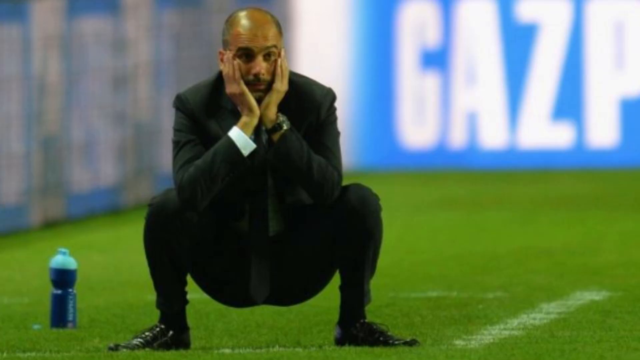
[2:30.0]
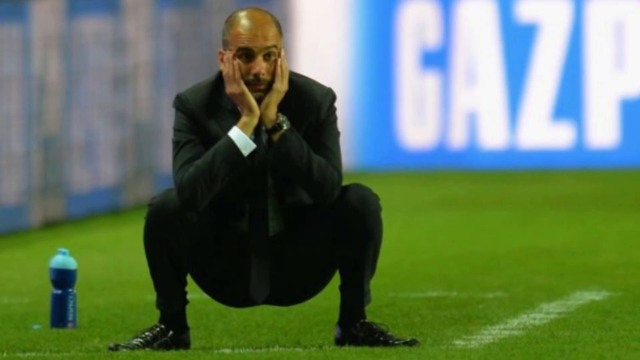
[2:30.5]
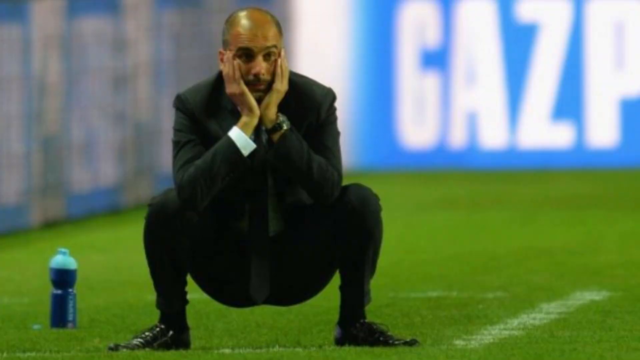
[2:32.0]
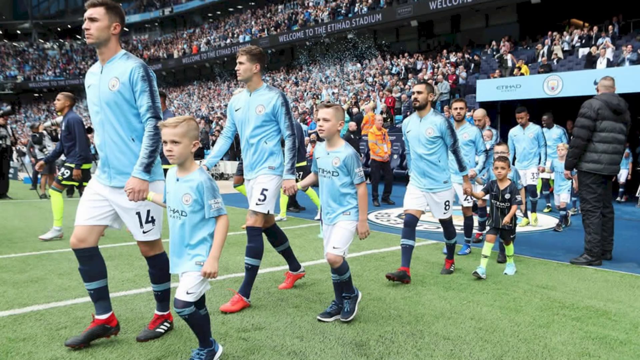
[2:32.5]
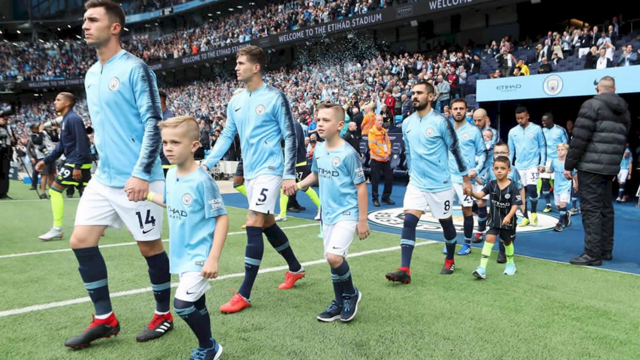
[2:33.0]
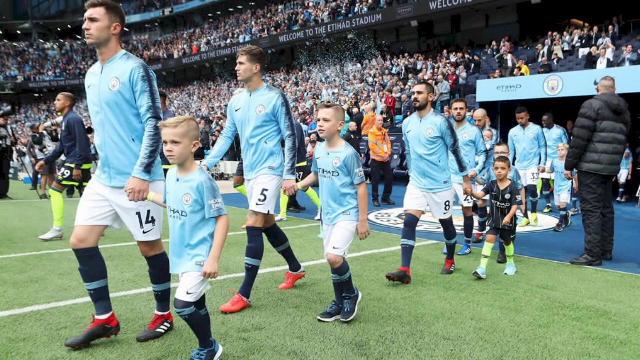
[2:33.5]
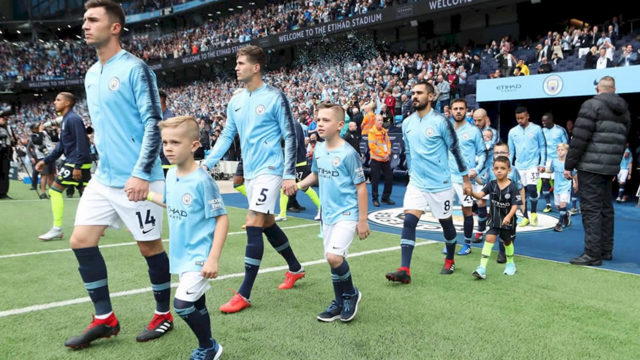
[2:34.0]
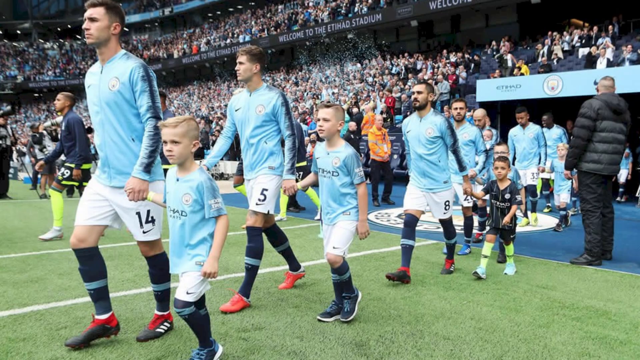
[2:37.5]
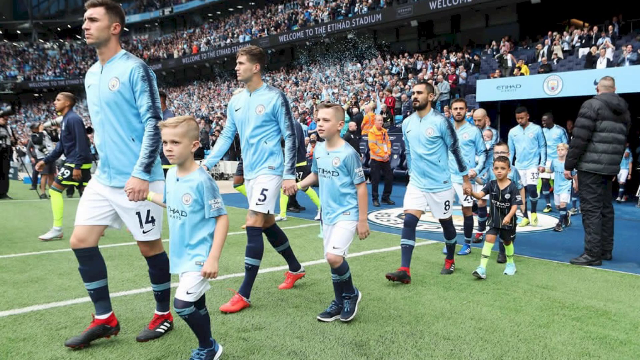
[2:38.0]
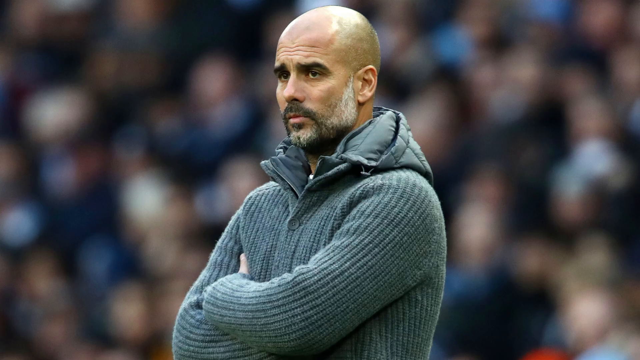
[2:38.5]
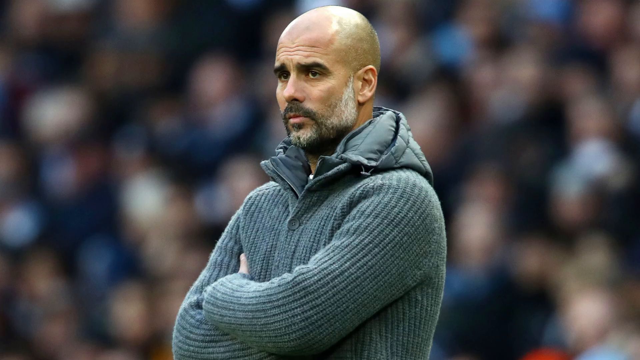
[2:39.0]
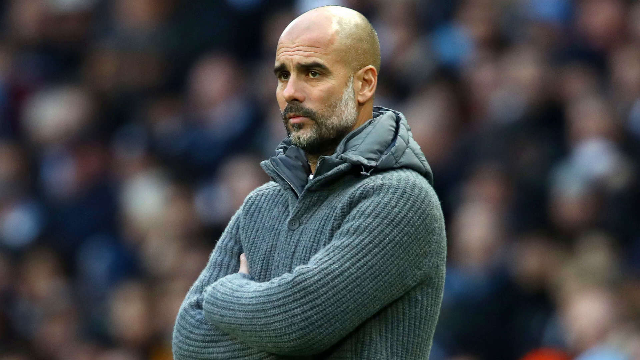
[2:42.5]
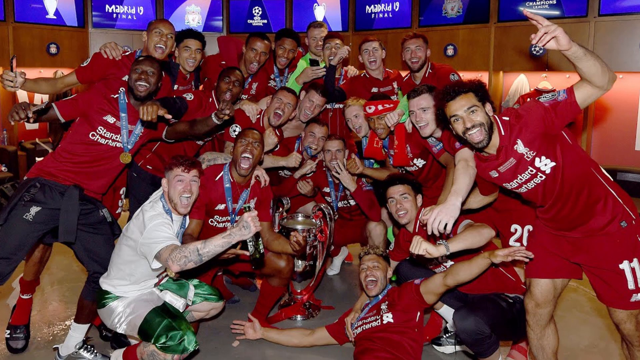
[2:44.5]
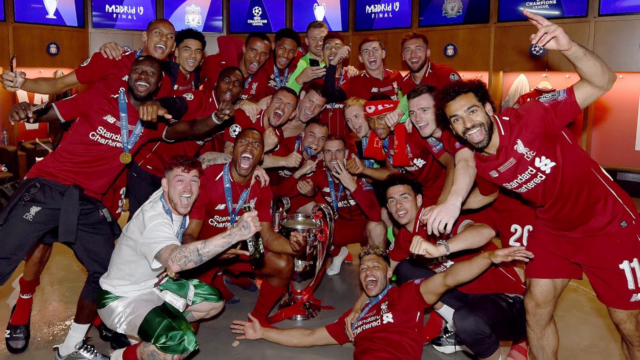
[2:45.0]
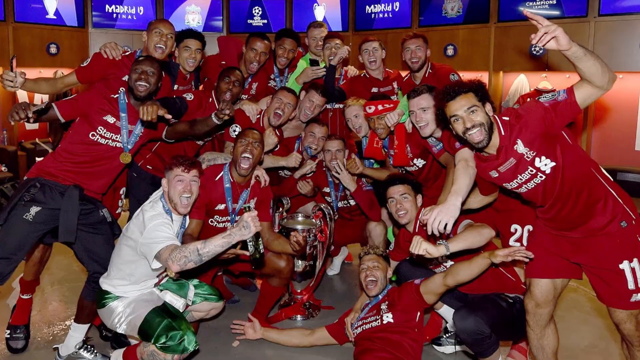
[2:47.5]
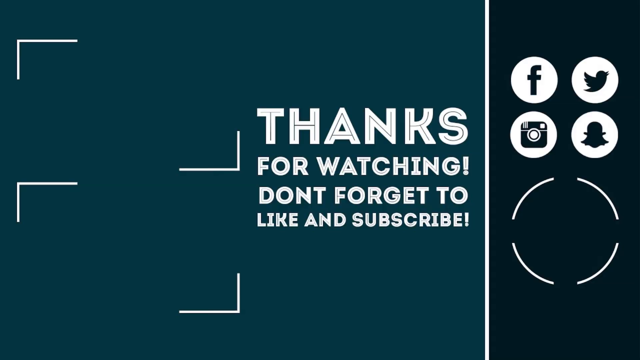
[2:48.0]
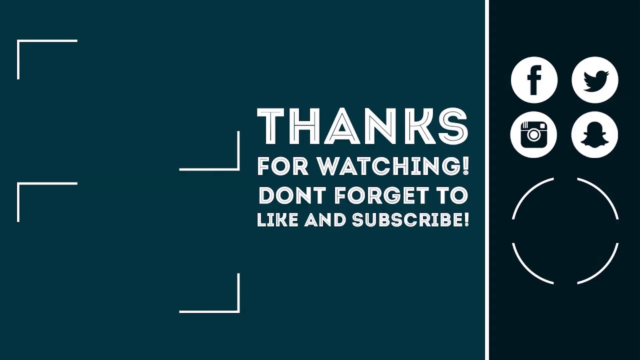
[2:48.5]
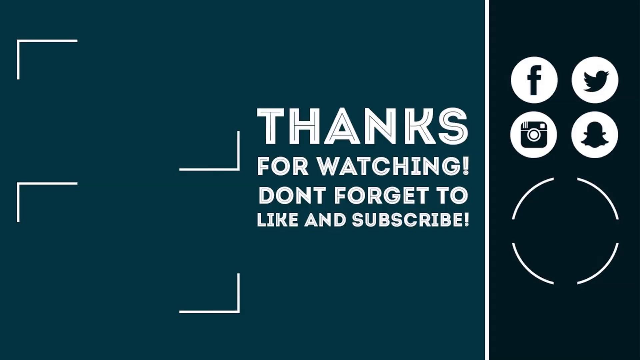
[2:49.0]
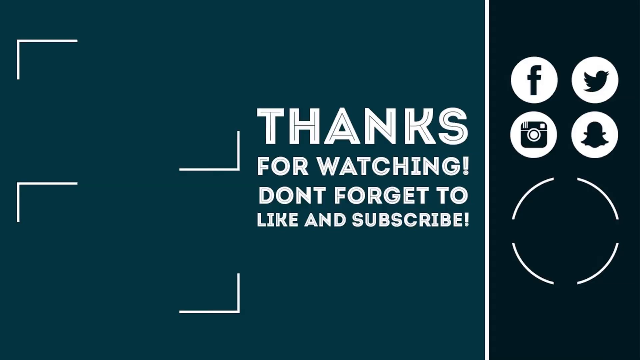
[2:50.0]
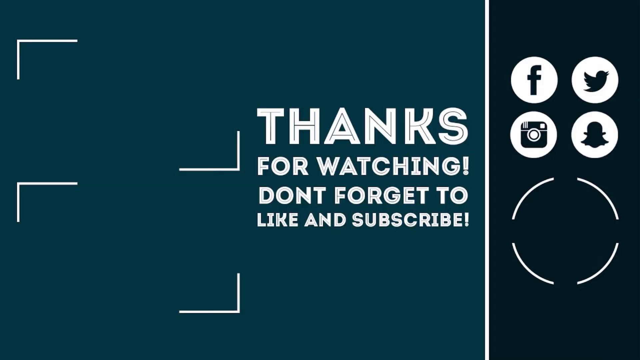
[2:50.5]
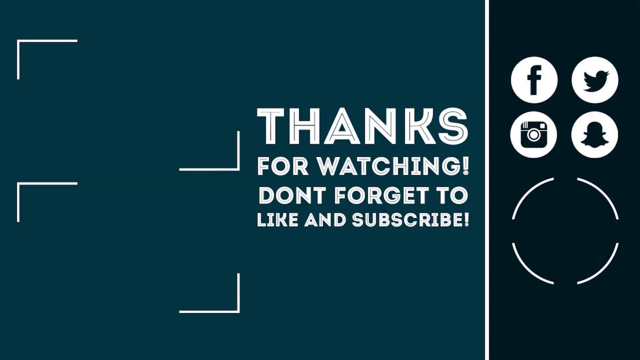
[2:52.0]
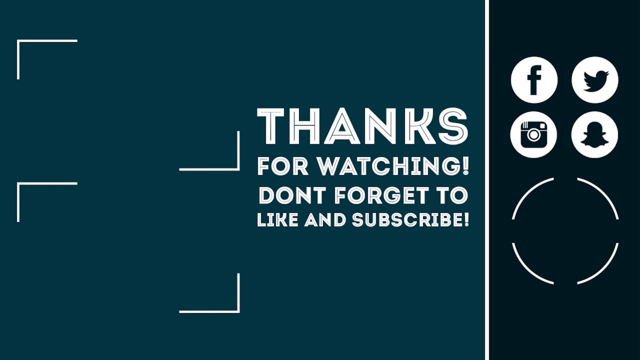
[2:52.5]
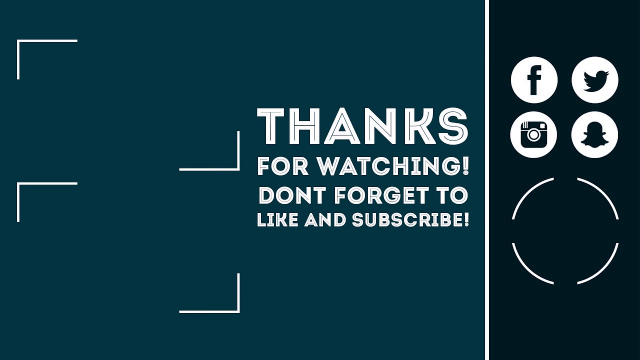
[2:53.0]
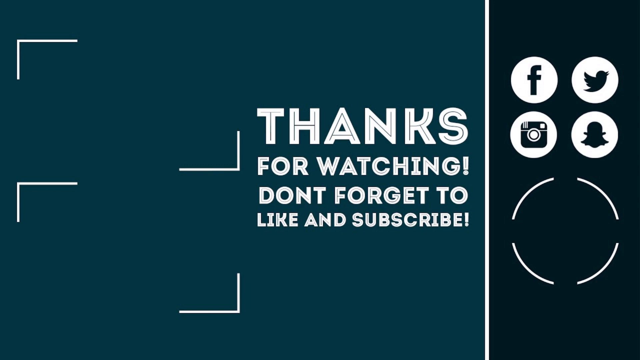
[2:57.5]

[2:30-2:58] A man in a suit and tie is hunkered down almost to the ground, hunched over just barely about two or three inches above it, with both hands on the sides of his face. He wears a watch on his left arm, and some kind of bottle is on the ground to his right. He appears to be on some kind of green turf. The scene changes to what appear to be sports players, maybe soccer, maybe rugby, all wearing light blue shirts, coming out of a tunnel with children holding their left hands. Some of the kids wear the same colored short-sleeved shirts, but one wears a black top with black shorts. All the others wear white shorts with the light blue tops. A big crowd is visible in the background in the stadium stands. The ground doesn't look like real grass; it looks like green turf of some kind.